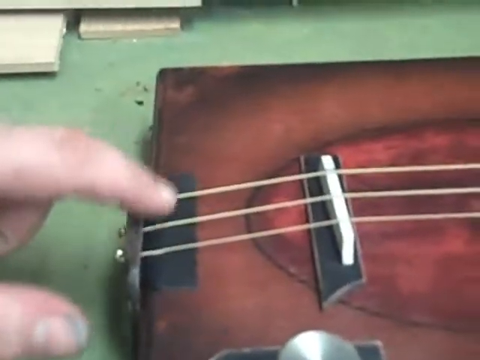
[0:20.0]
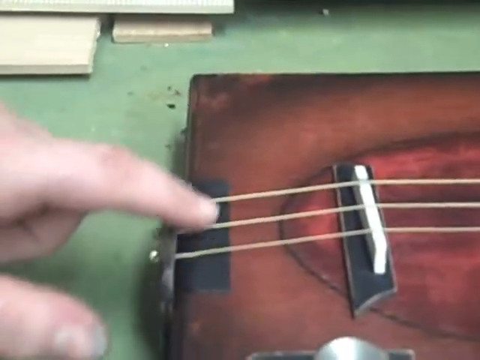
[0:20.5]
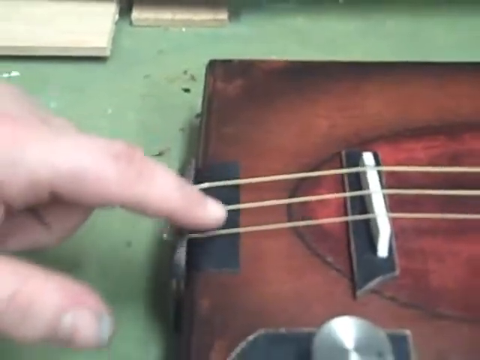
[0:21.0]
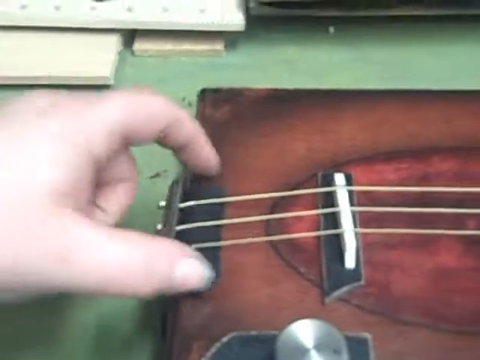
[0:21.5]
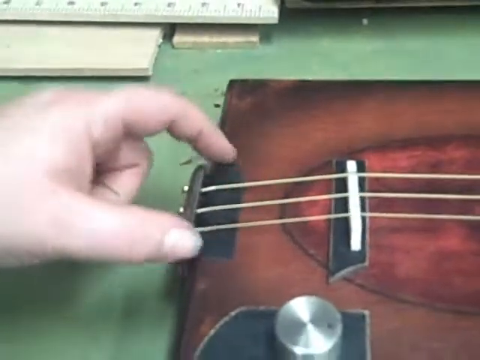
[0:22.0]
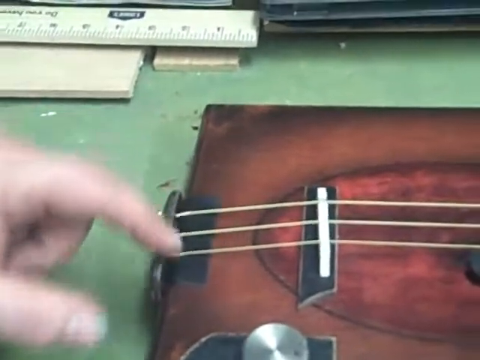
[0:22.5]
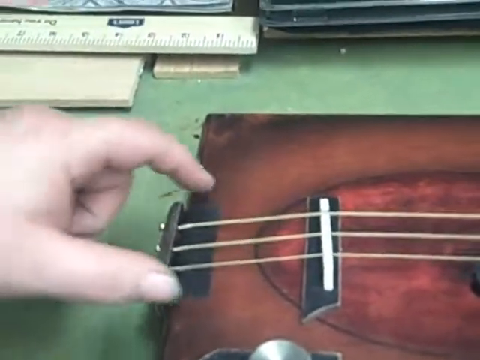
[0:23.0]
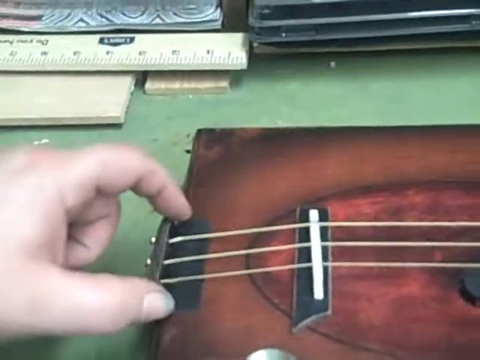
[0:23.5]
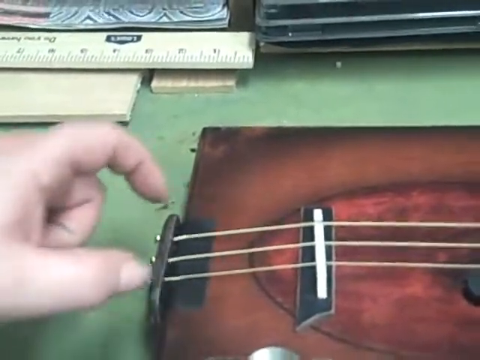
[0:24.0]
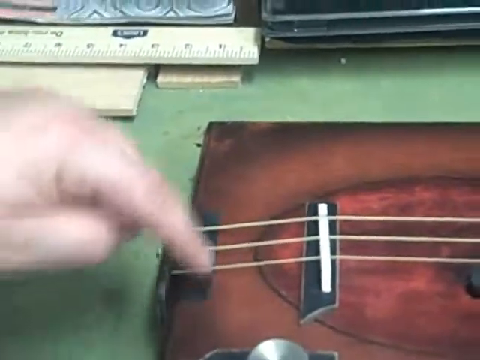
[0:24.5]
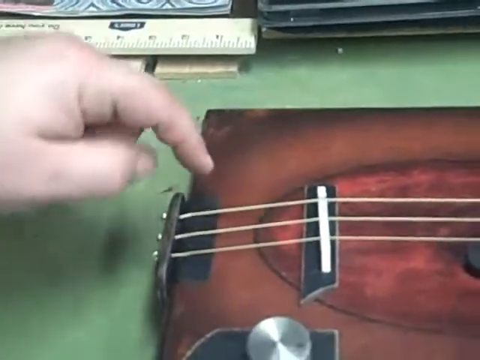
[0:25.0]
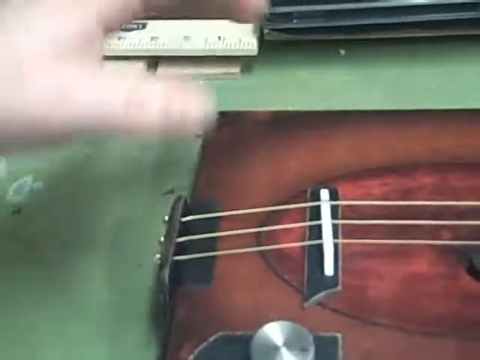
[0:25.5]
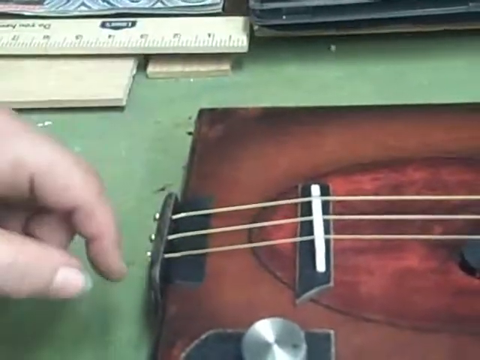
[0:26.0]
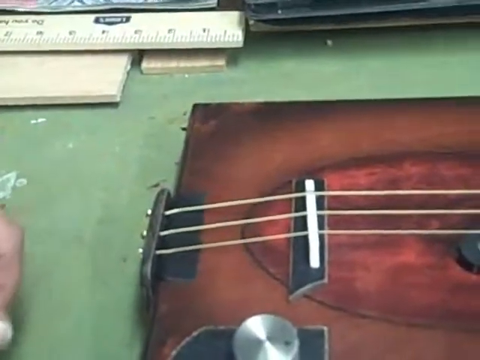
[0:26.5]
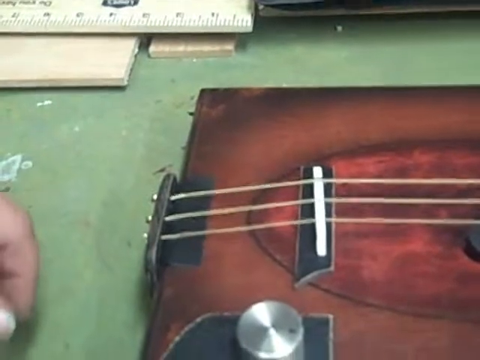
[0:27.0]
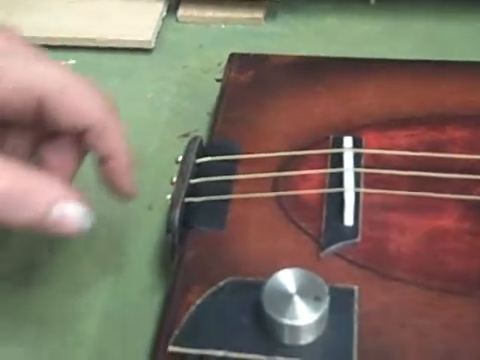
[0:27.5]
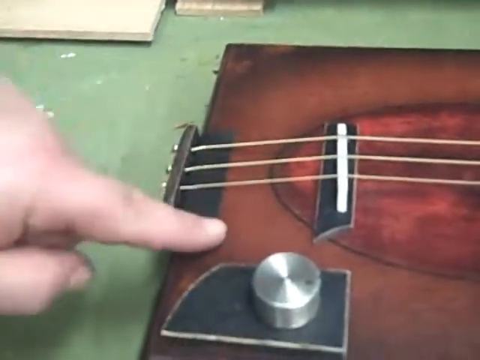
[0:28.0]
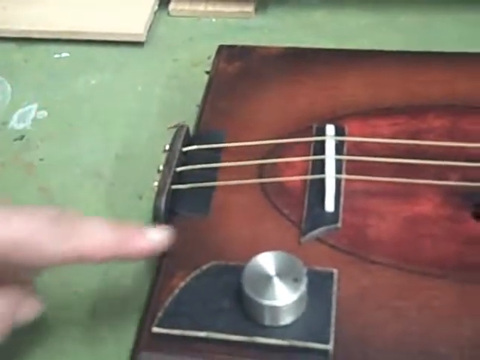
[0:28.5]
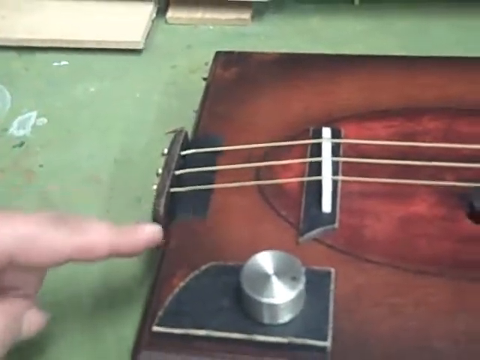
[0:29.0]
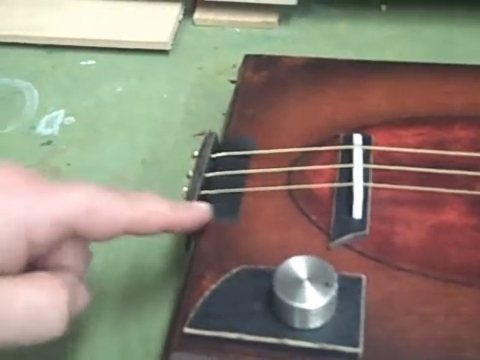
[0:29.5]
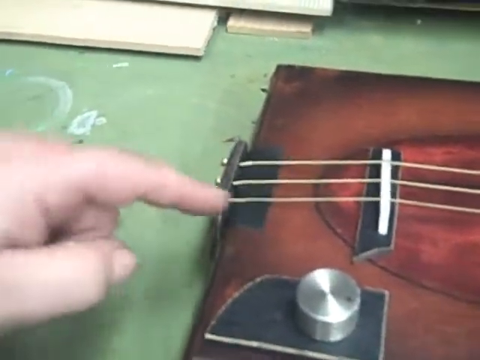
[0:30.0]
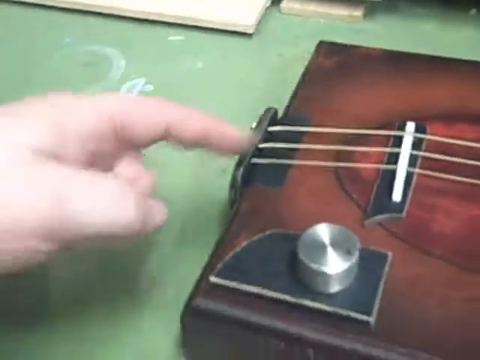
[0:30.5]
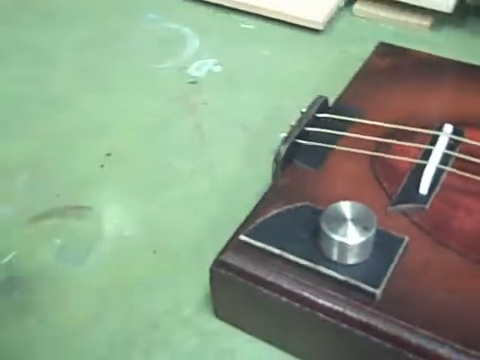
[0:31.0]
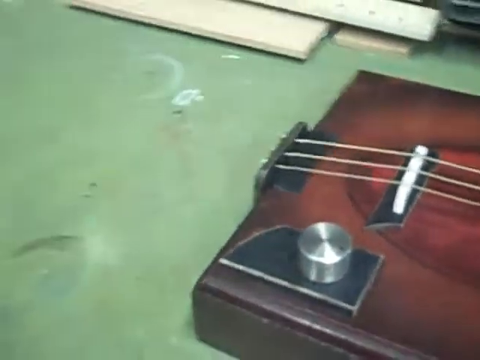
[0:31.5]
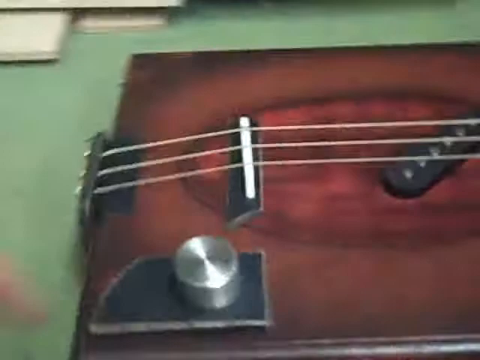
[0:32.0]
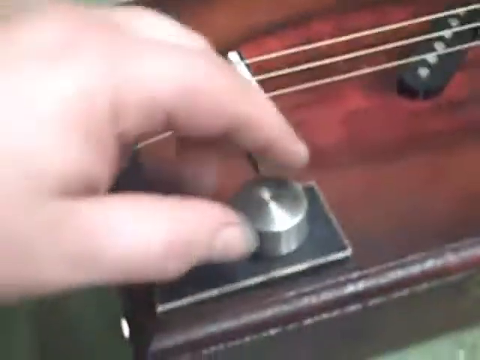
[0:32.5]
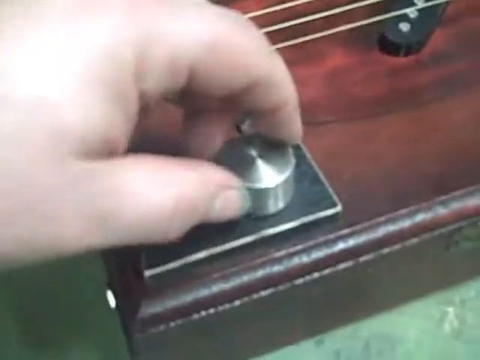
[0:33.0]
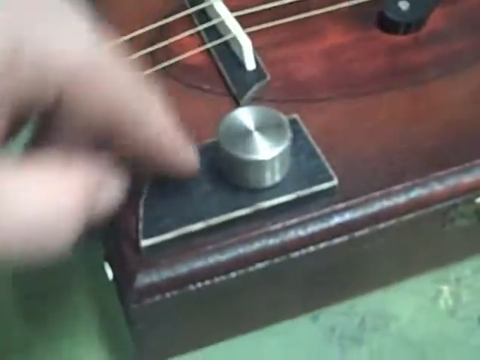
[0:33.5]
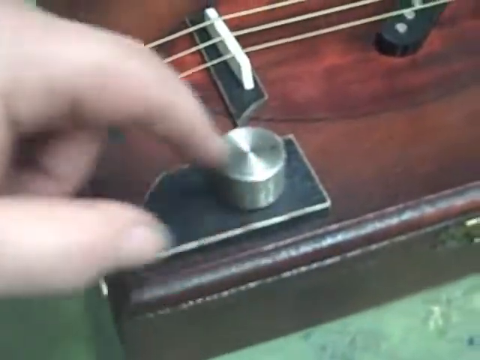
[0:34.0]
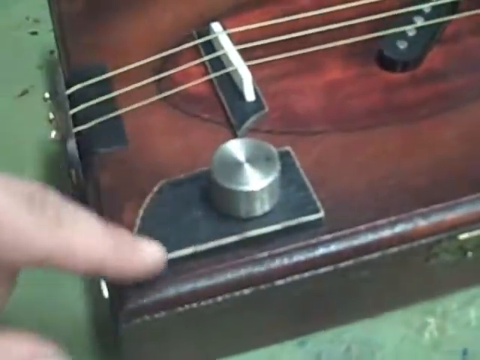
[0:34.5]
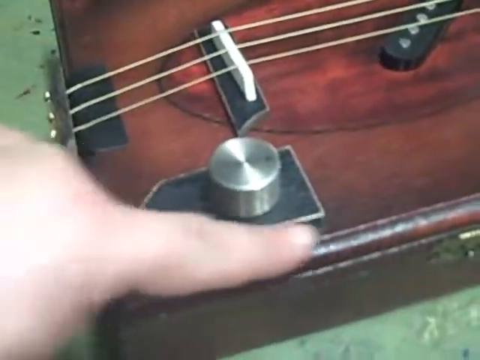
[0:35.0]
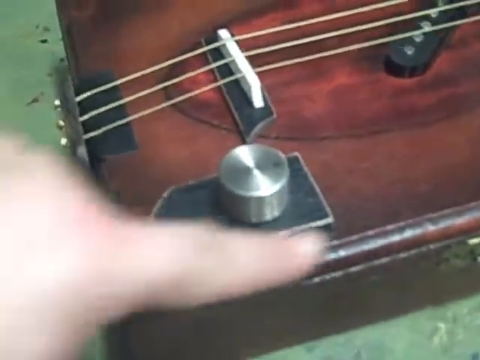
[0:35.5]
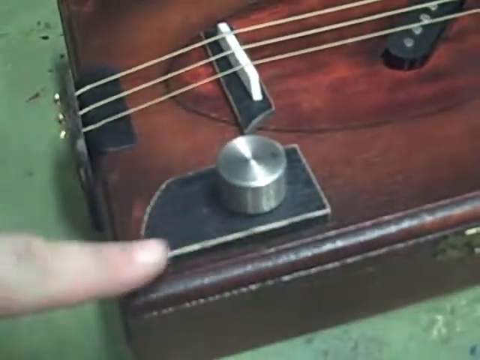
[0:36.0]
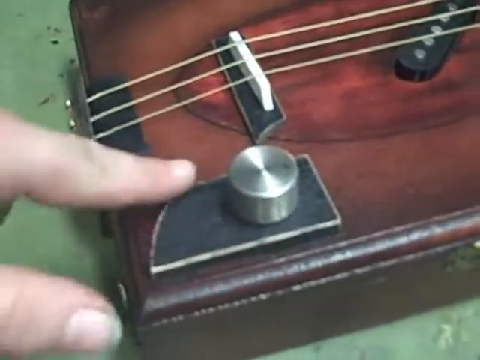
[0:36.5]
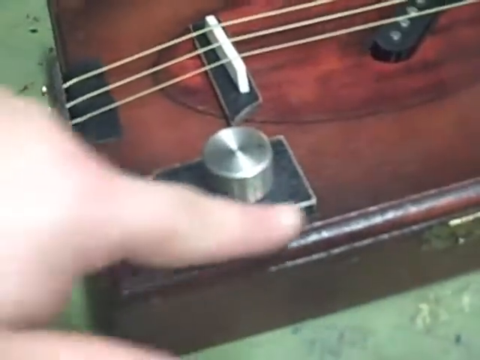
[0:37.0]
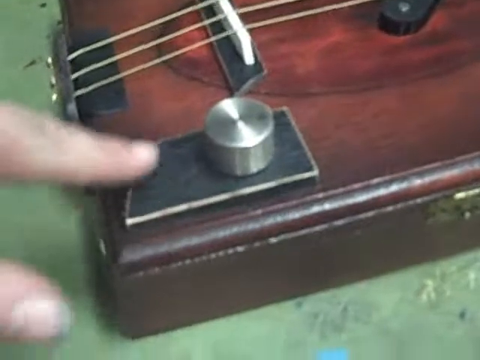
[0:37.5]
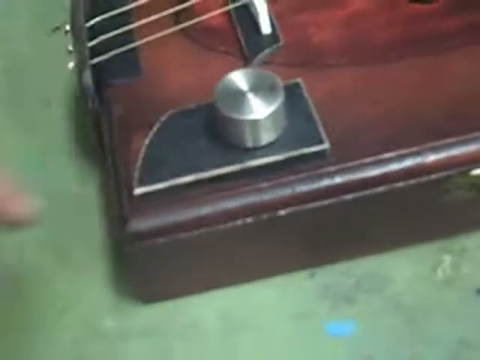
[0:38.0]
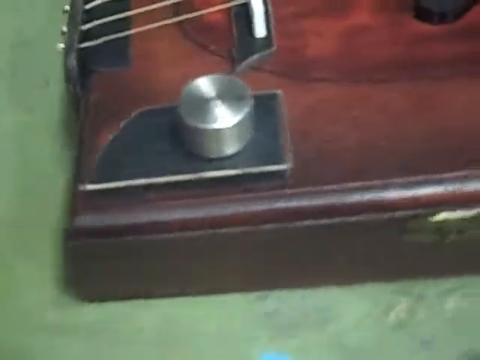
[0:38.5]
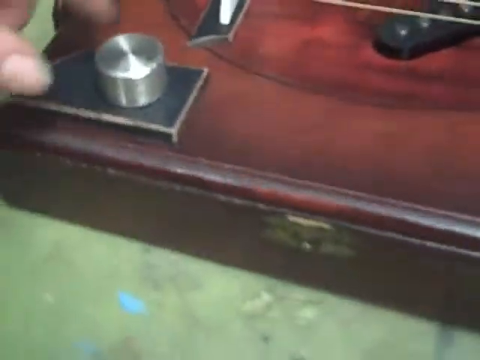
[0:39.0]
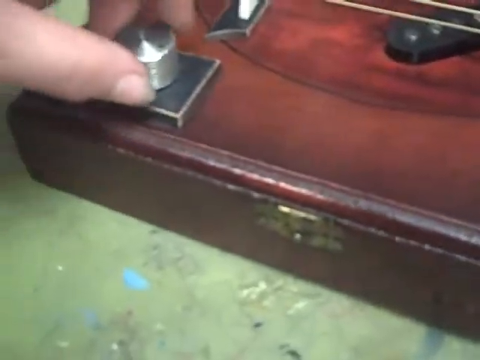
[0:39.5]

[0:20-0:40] A finger points at the three strings, probably indicating how many there should be and how wide they should be. The guitar is on a grid, with a ruler in the background, some pieces of wood and a lot of dirt. He uses his fingers to measure how wide the strings should be. He then points at a round silver knob, probably used to tune the guitar, which is on top of a black piece of board. When he places his finger on it, he looks like he is about to turn it. The person has very dirty nails.